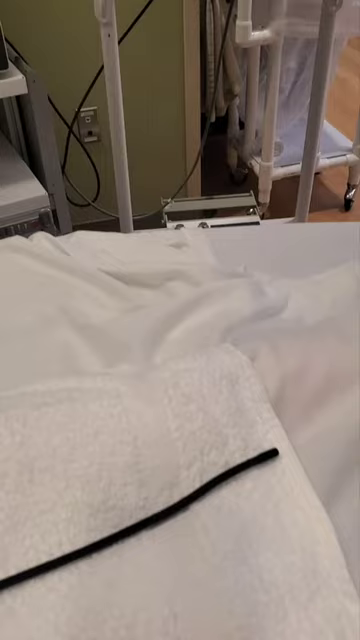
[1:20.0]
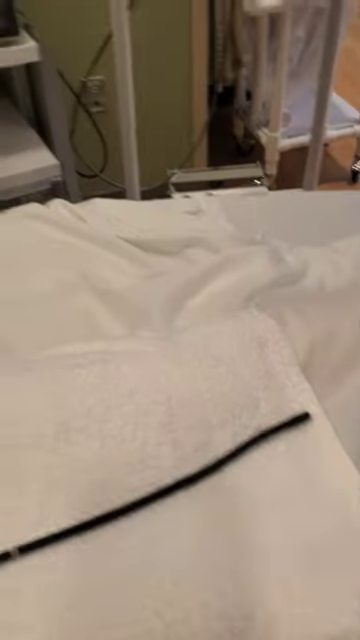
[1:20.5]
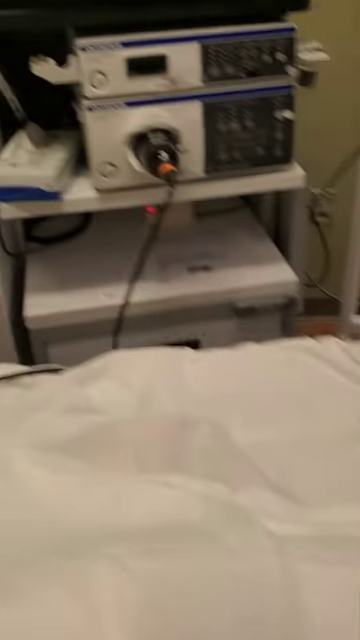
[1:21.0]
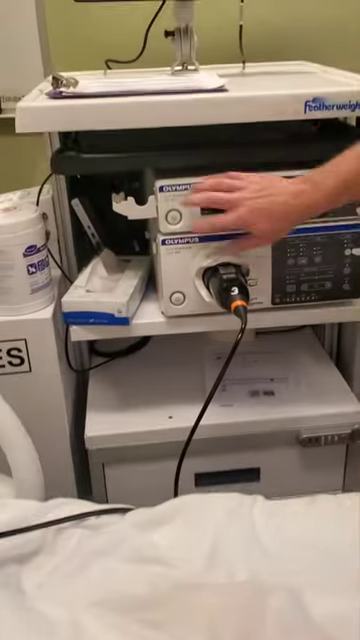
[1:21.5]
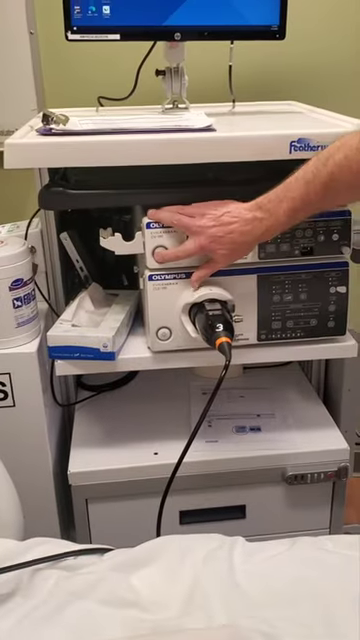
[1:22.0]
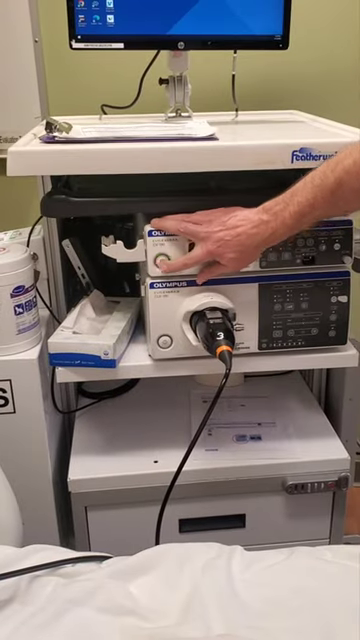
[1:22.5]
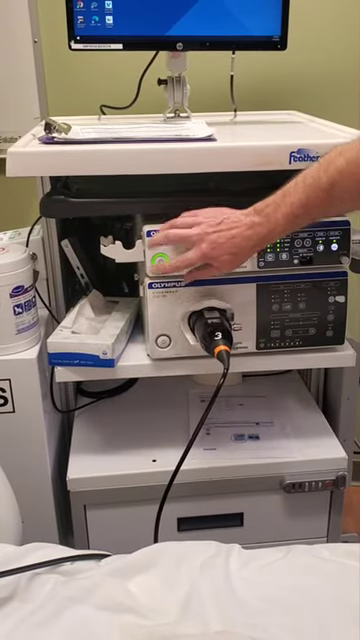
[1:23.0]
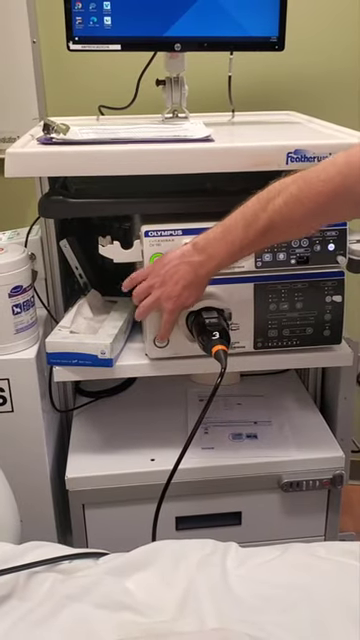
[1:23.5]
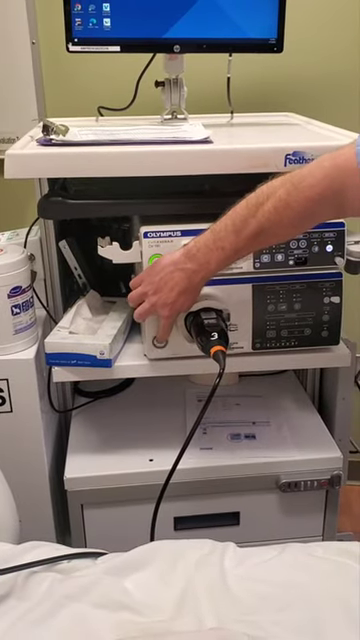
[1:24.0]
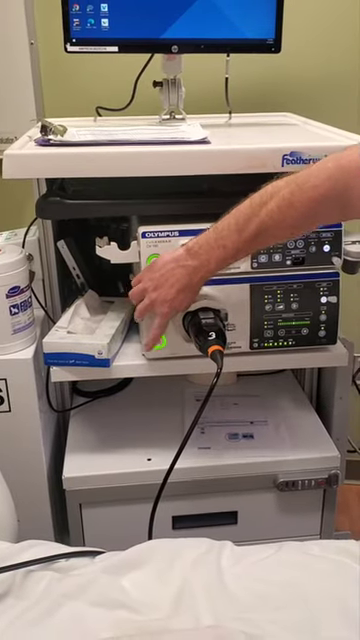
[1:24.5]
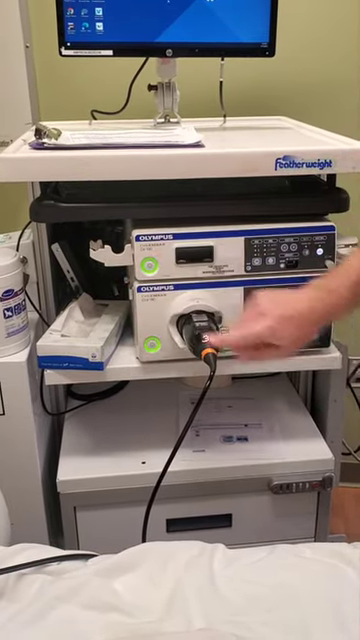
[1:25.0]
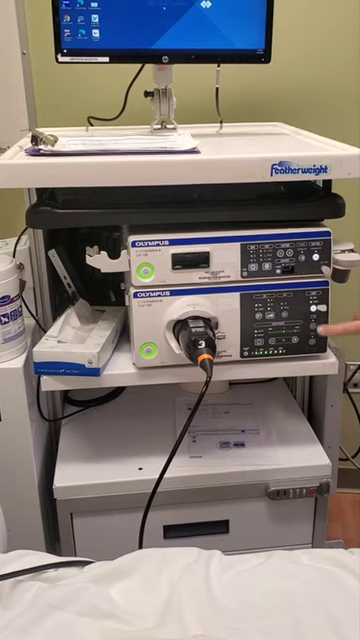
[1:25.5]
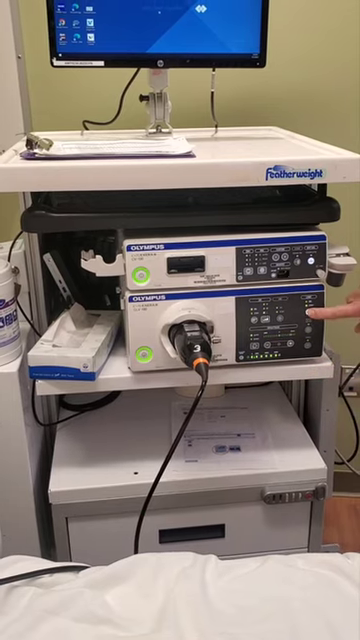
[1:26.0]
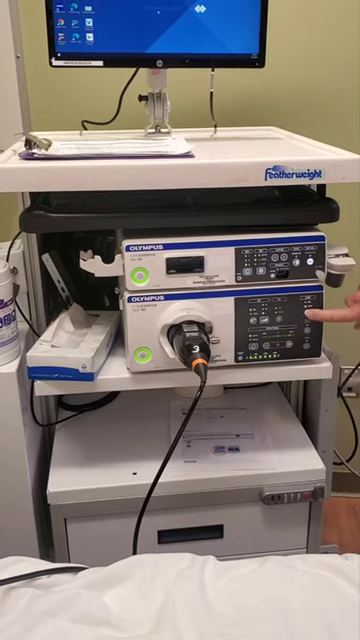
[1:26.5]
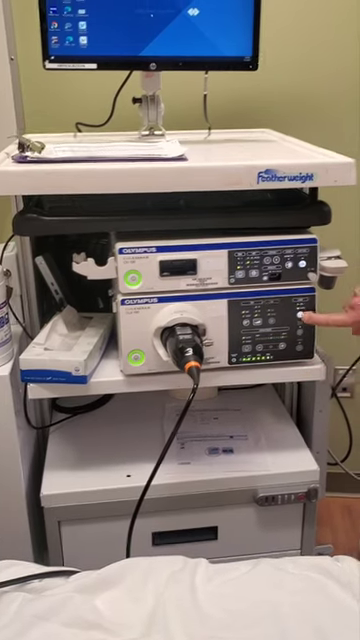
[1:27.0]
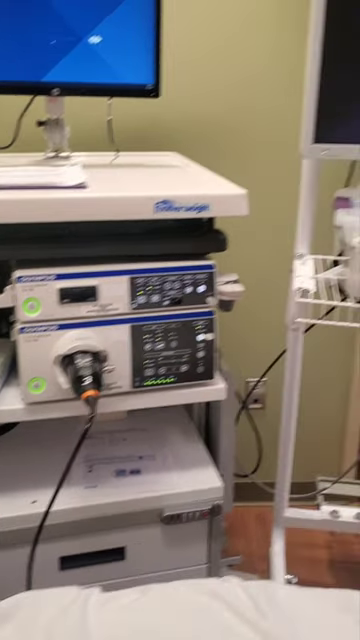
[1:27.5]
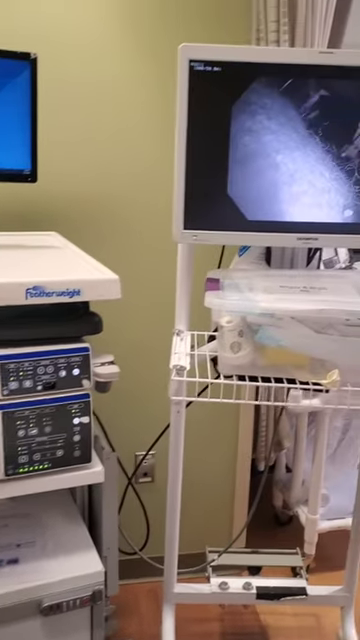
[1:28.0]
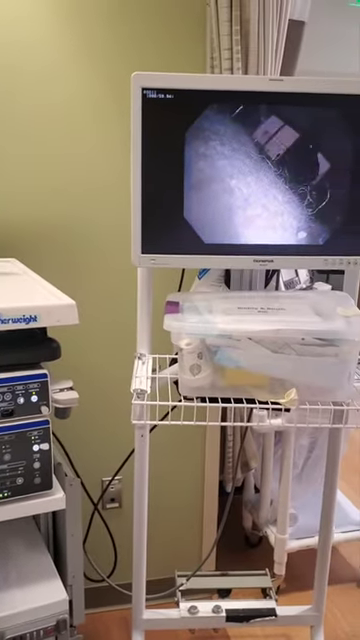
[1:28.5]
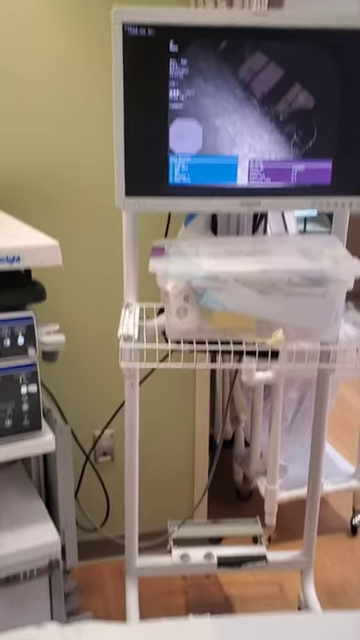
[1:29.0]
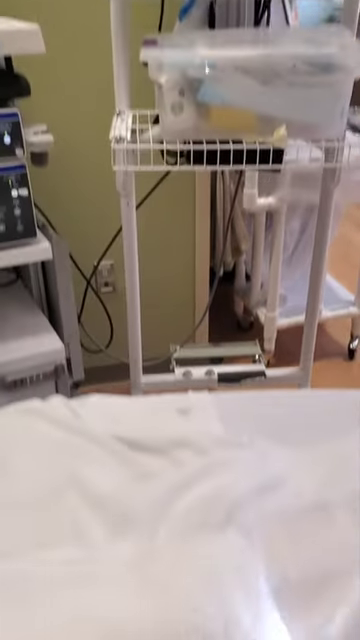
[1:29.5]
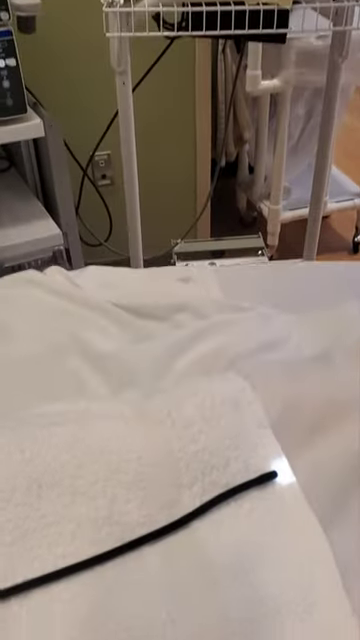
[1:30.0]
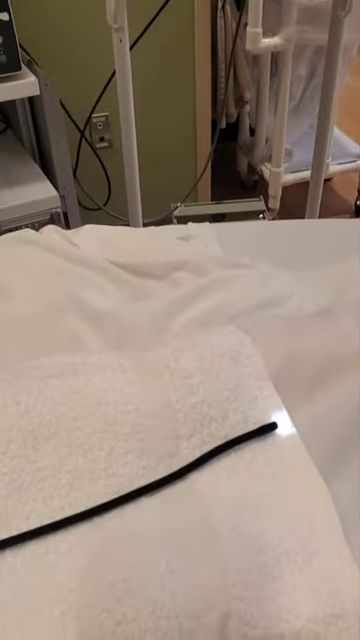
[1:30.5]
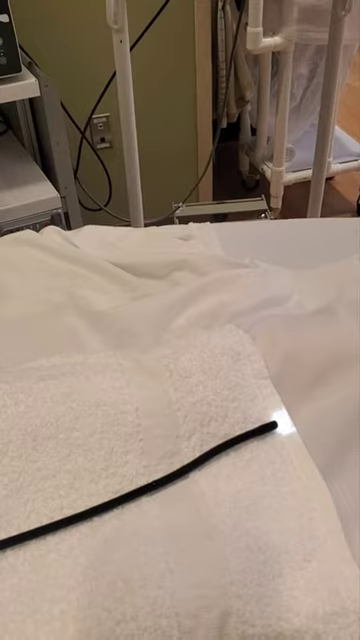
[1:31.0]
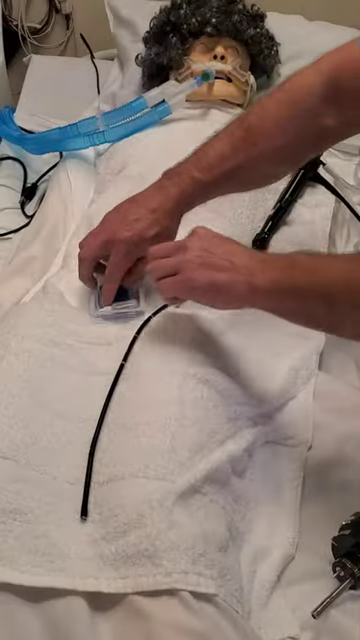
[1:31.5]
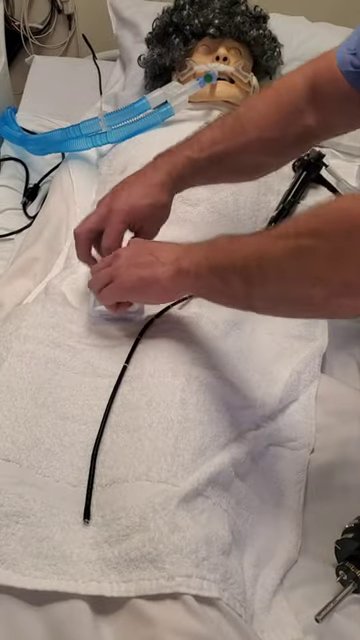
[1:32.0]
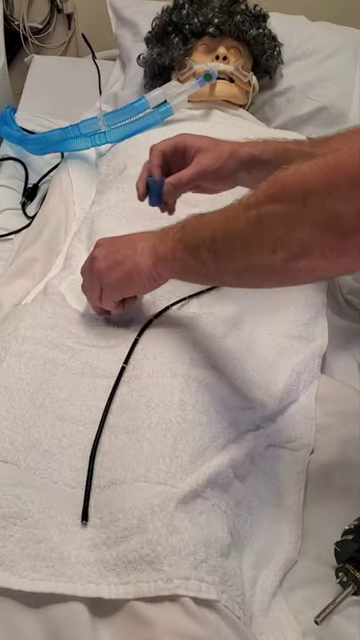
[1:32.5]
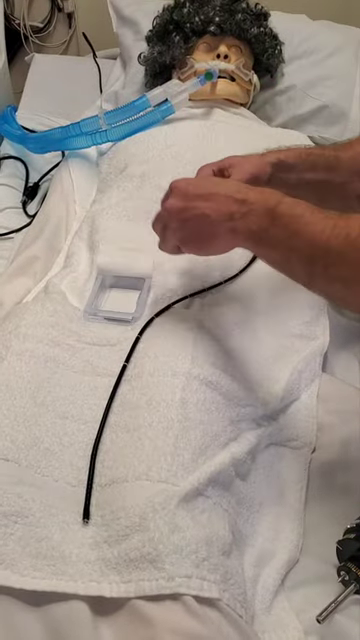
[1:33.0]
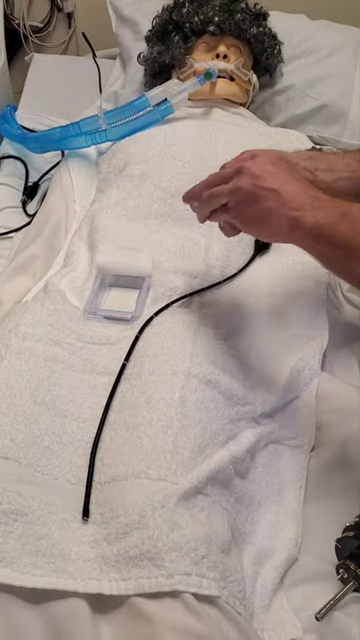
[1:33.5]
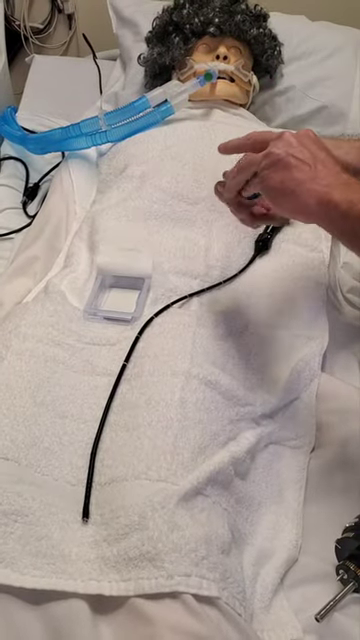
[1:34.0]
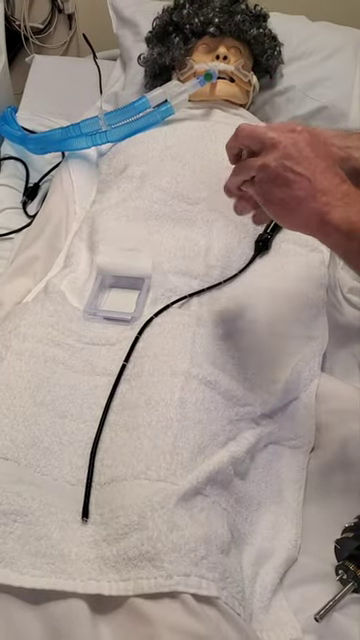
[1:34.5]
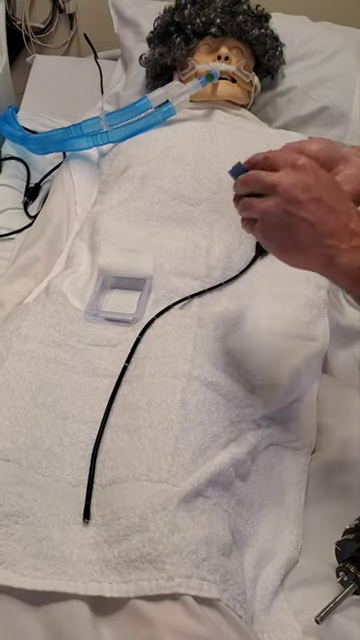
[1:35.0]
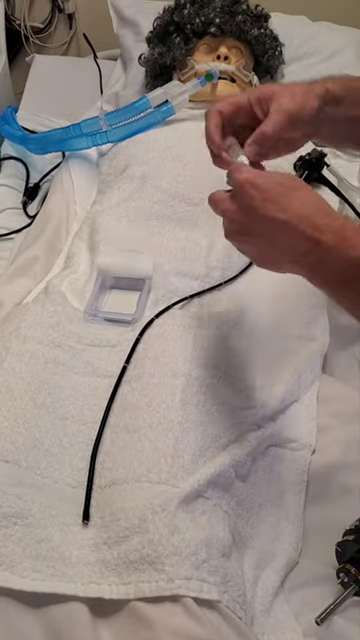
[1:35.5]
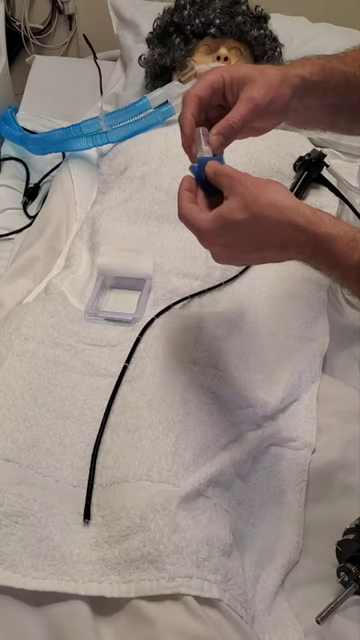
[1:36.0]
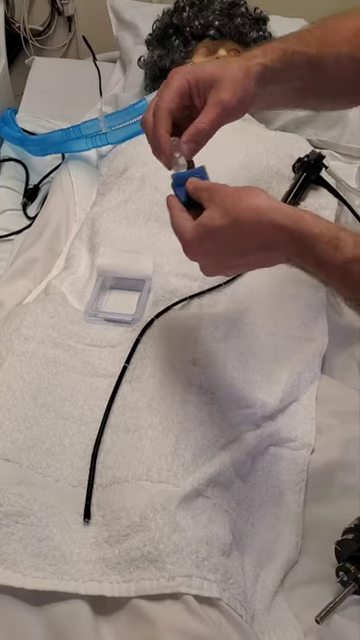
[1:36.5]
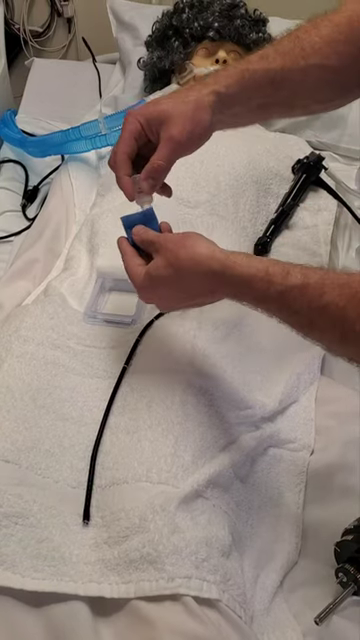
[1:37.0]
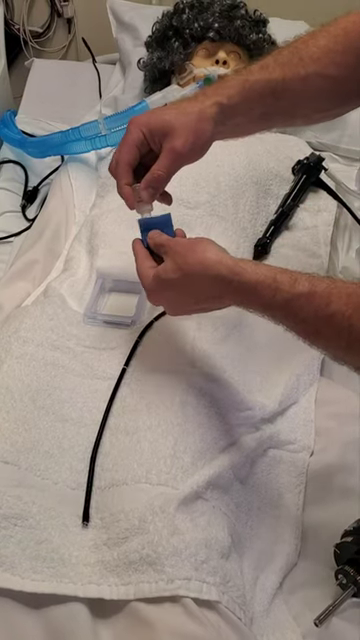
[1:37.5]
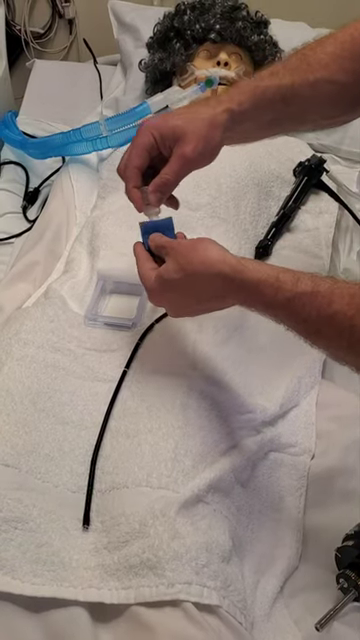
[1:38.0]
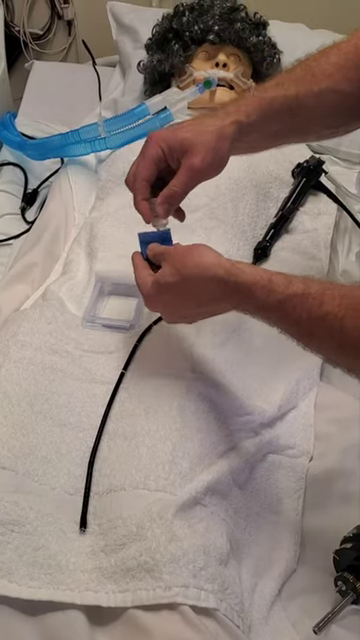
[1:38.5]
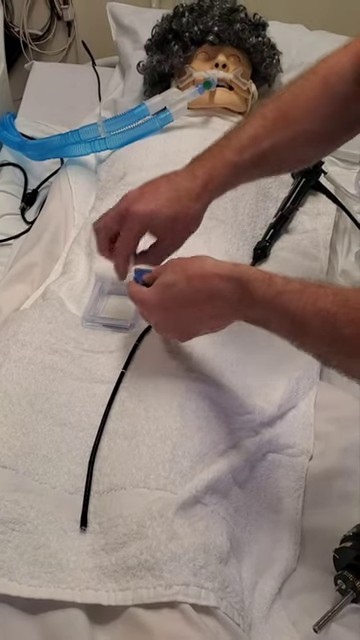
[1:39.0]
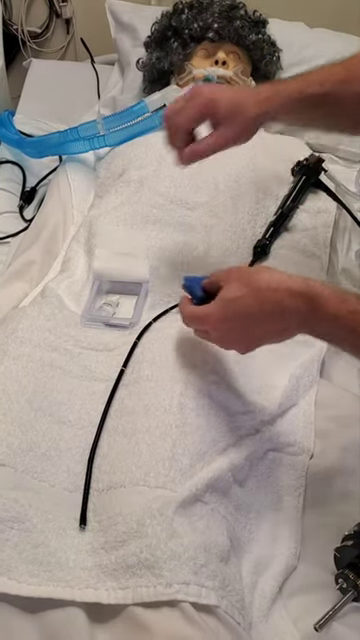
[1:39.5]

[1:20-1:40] Someone turns on the device that the black handheld device is connected to; this power source is labeled "Olympics." As the person turns it on, the view focuses on the monitor attached to the cart, which looks like it is showing a camera's view. A long cord is connected to the handheld device; it is apparently the camera itself, possibly inserted to get a view of the inside of someone's body. The camera zooms in on the person turning on and prepping the device as they put some type of solution, apparently a lubricant, on a little blue rag.